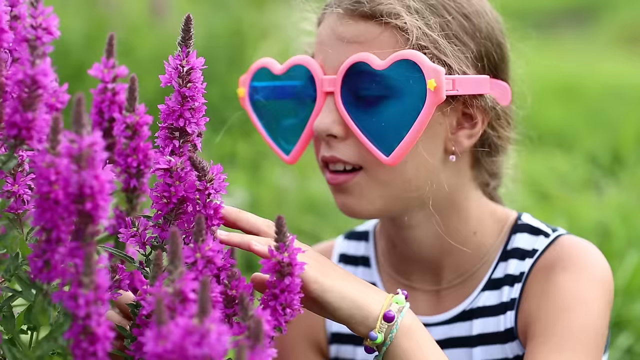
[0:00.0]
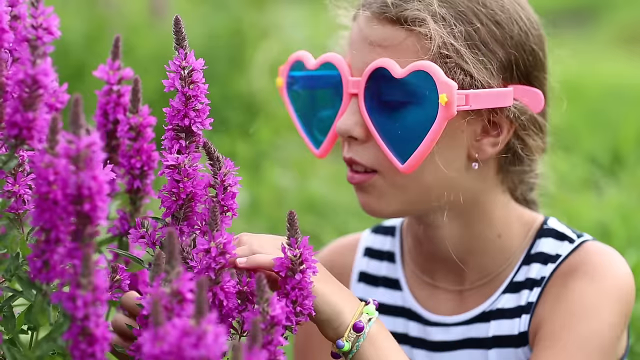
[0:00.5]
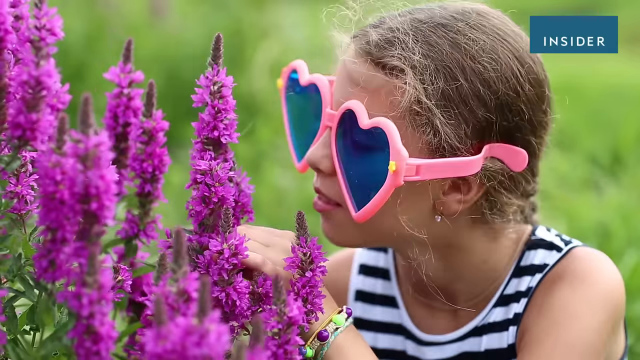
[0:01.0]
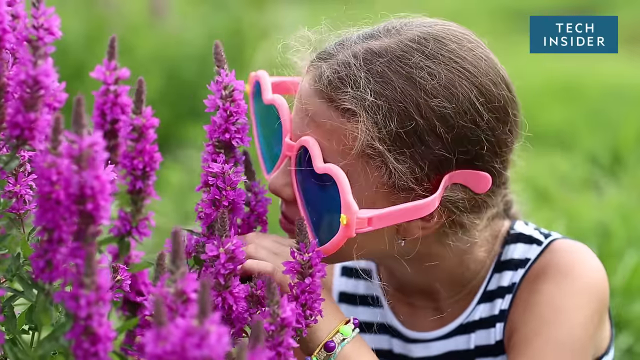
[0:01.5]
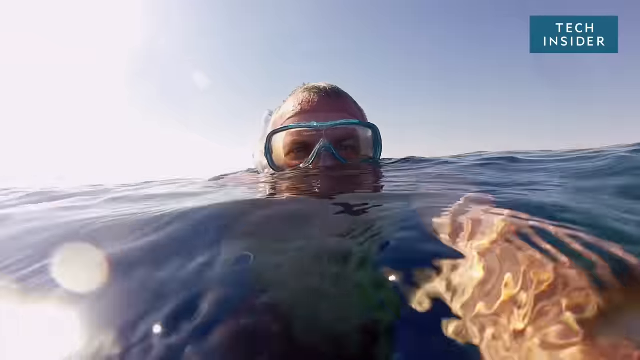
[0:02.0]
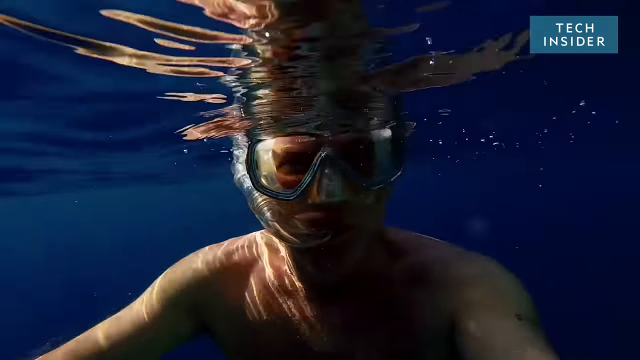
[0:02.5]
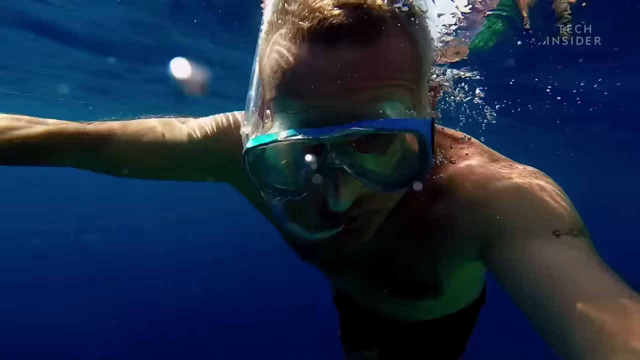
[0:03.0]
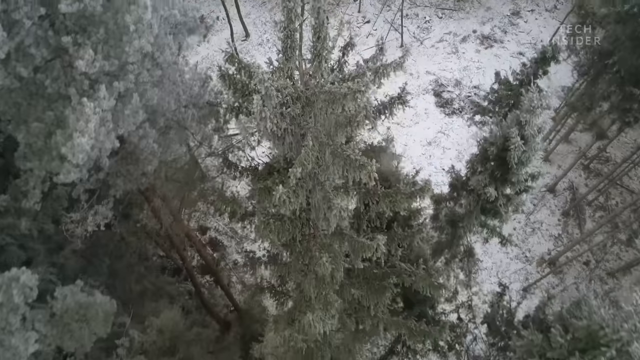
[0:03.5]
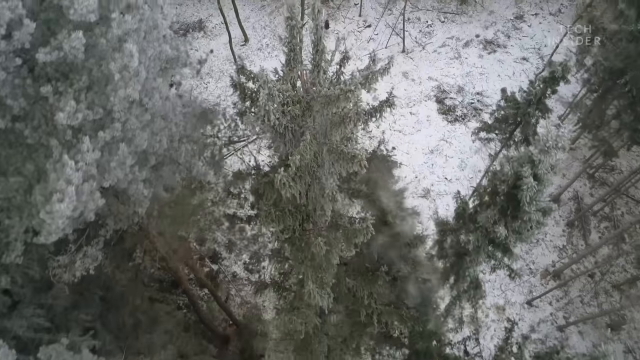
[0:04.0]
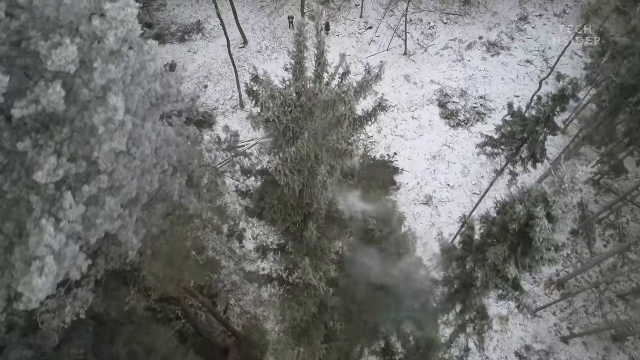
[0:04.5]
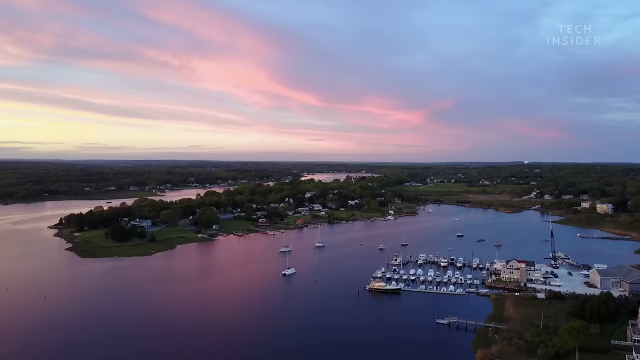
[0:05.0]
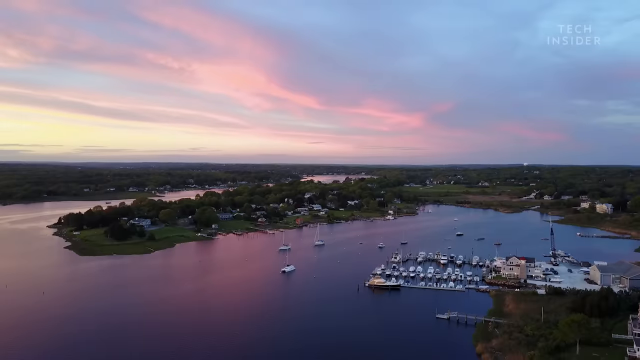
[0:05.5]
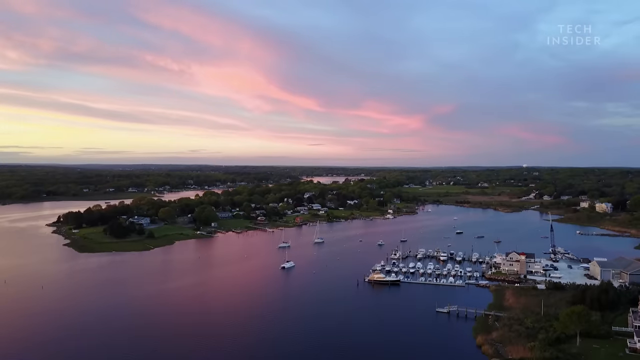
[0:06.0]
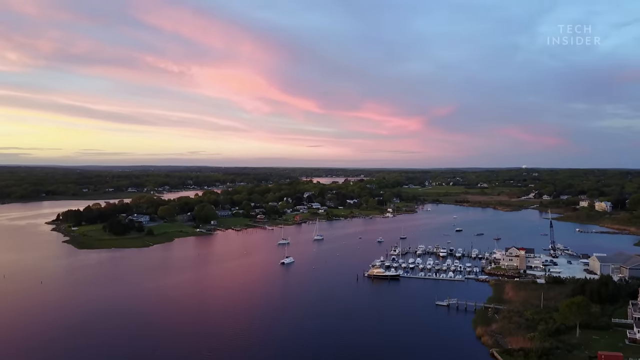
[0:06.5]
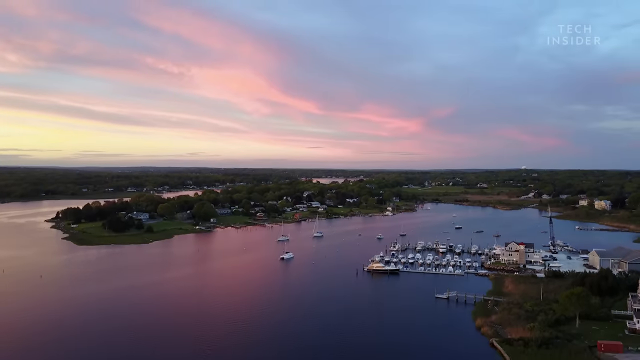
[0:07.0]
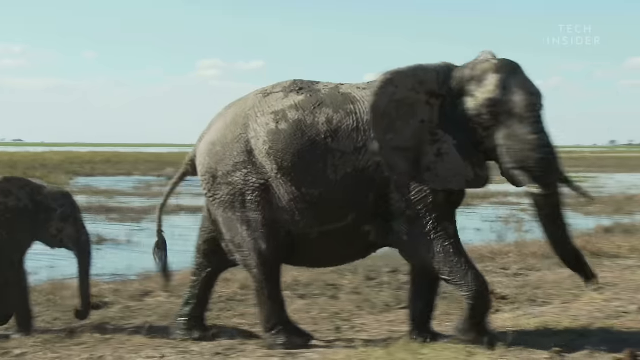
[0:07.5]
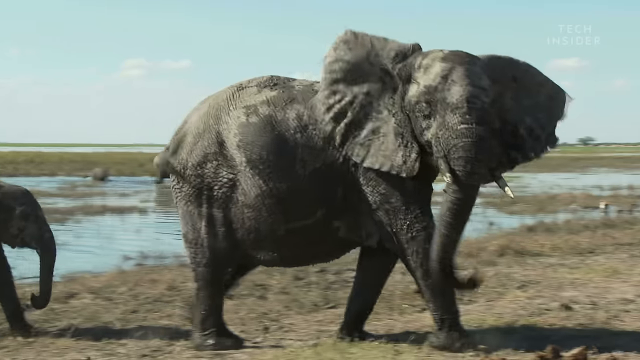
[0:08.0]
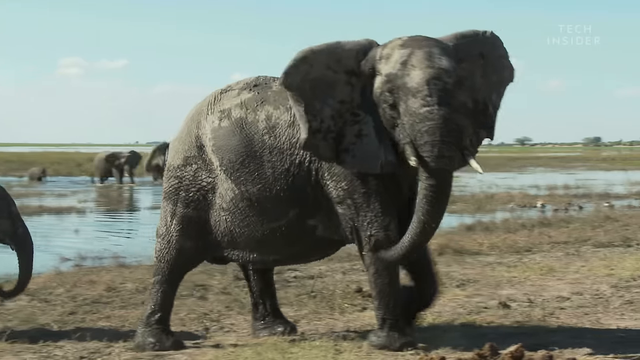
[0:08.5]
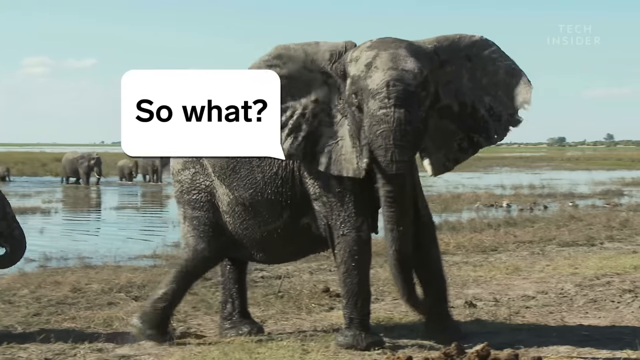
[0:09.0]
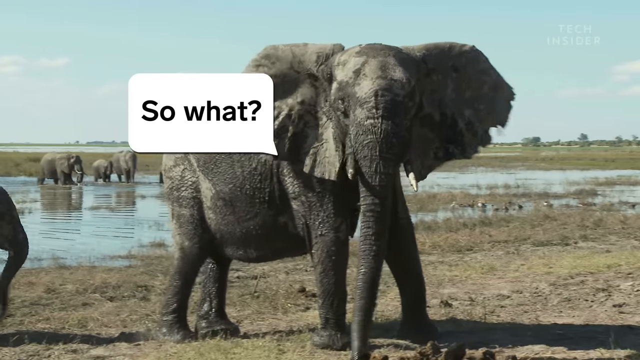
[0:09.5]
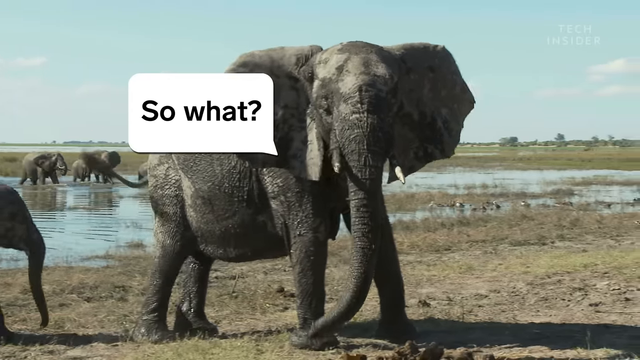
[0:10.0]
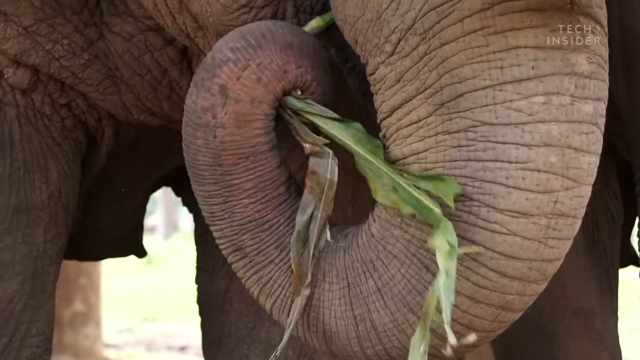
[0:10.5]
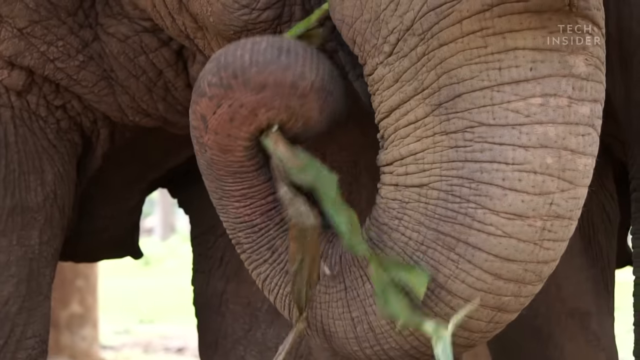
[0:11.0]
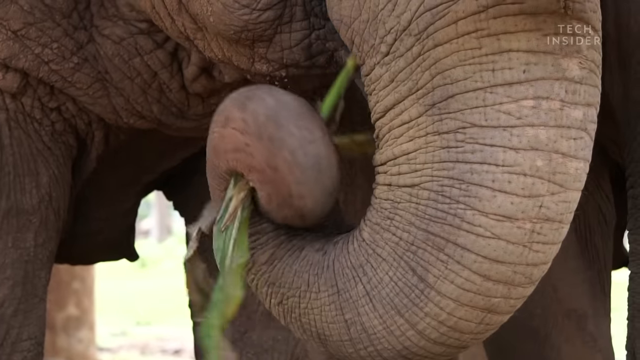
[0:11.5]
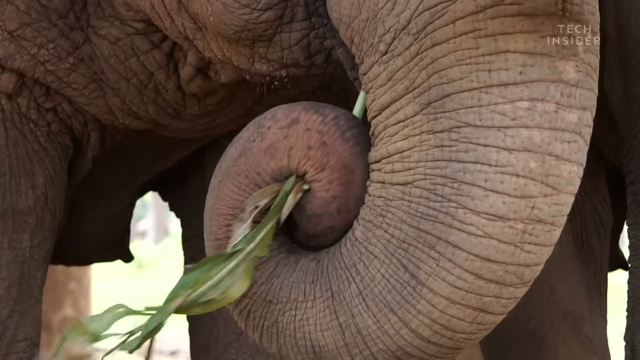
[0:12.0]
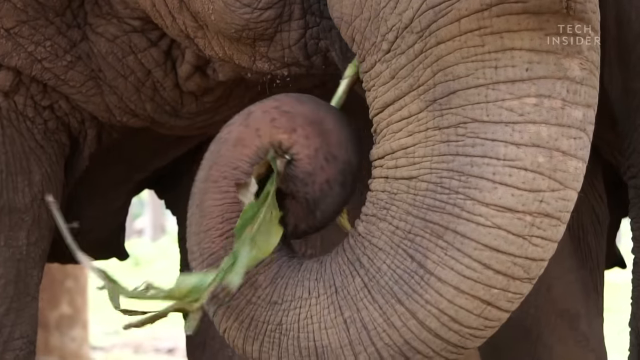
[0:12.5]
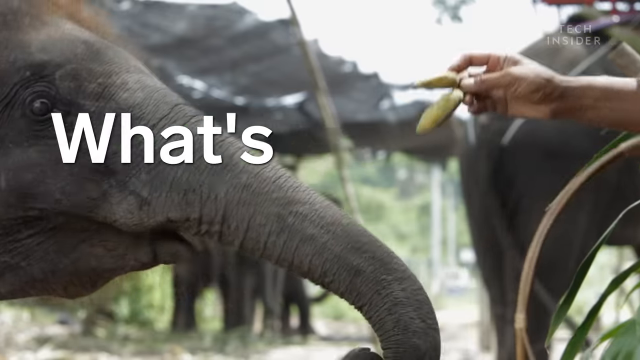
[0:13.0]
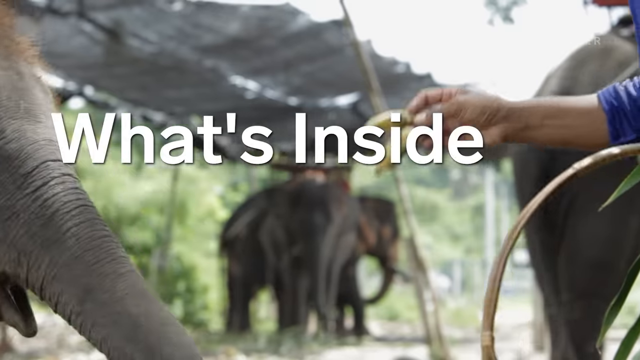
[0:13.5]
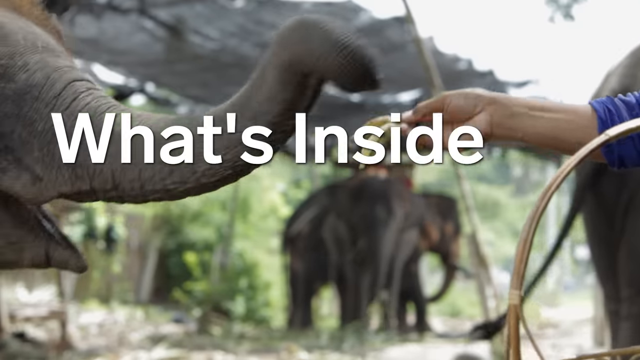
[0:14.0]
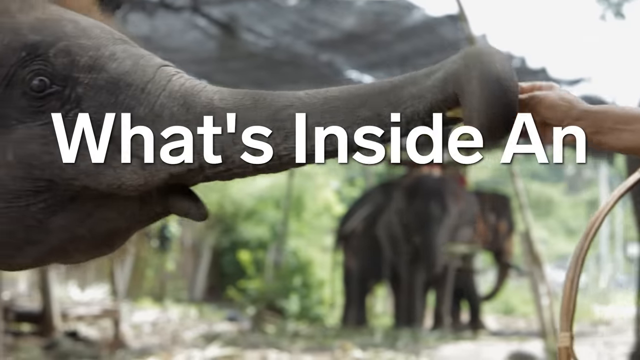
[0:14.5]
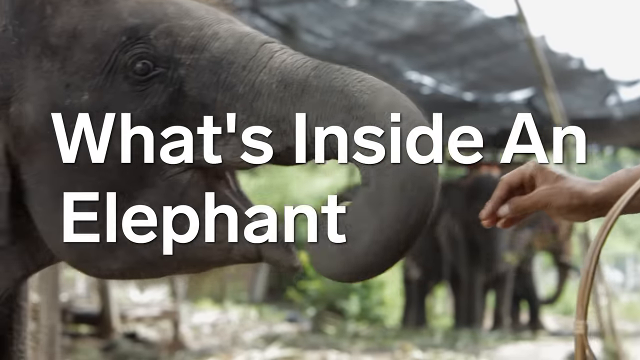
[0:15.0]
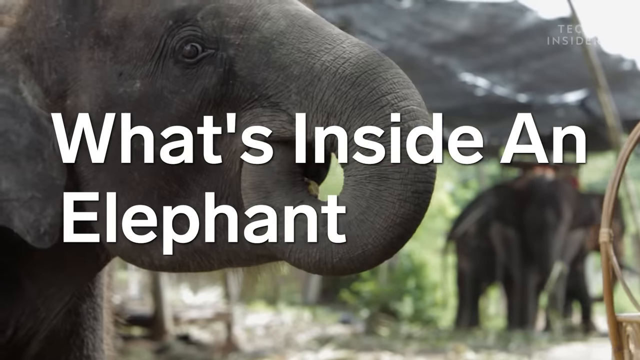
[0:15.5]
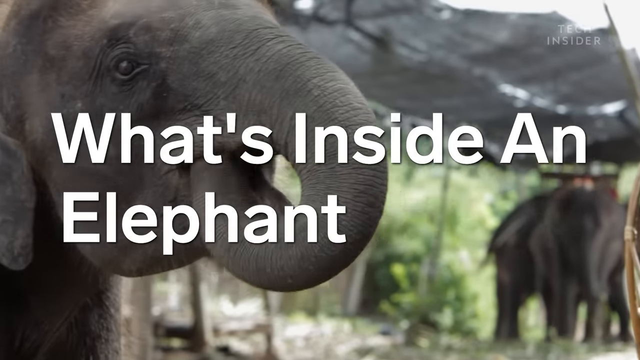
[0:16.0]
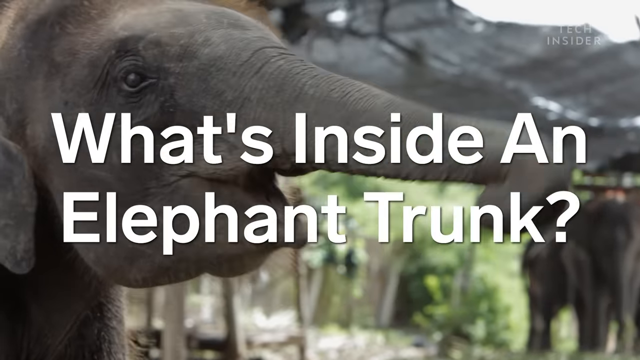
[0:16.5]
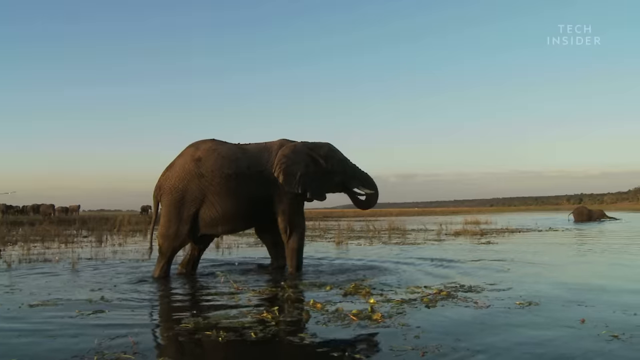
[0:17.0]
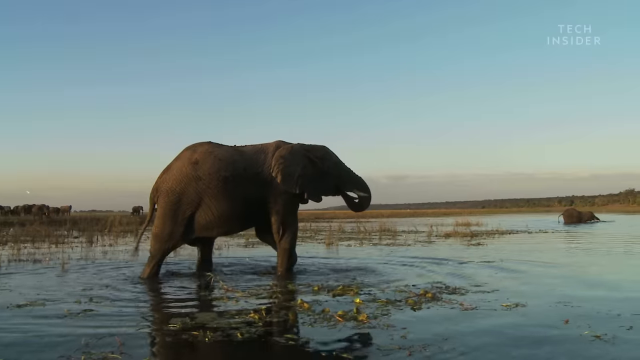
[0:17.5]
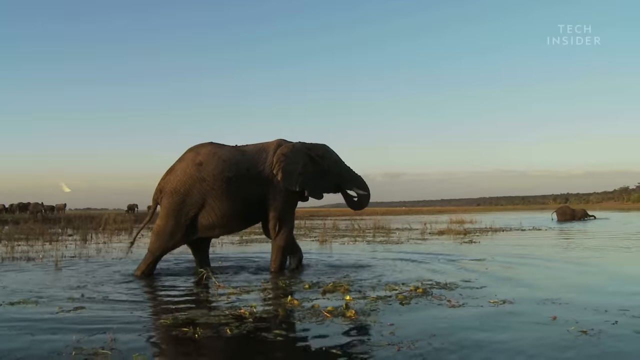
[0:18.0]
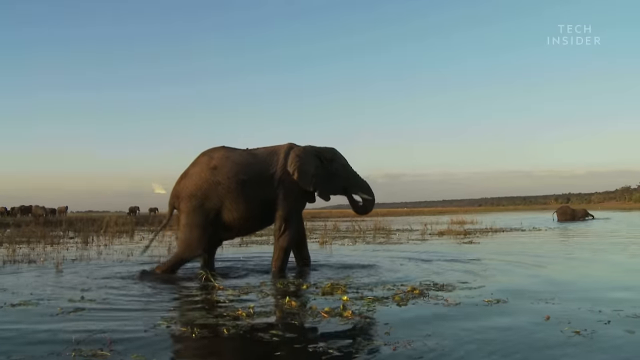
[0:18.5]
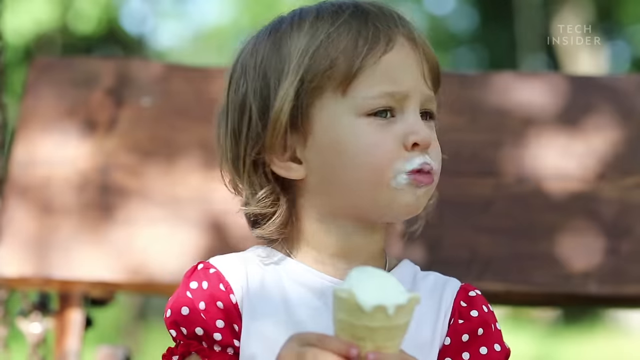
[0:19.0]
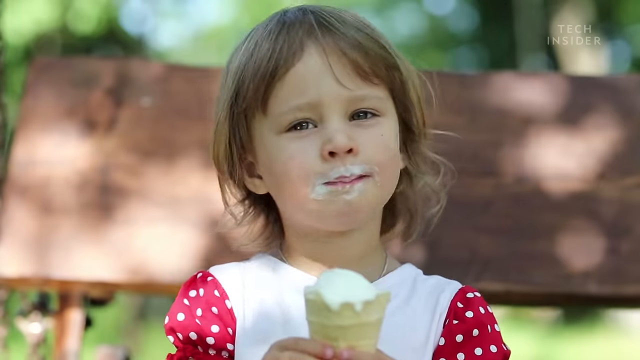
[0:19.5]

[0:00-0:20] The video begins with a little girl who wears pink glasses, a bracelet and a striped shirt. Then a tree falls, a big area appears, then an elephant with the words so what, and an elephant eating a leaf. The title "what's inside an elephant's trunk" is displayed while a person apparently feeds an elephant some bananas. An elephant trunk is spread down, a little elephant appears, and a child finishes eating an ice cream. The elephants are in a swampy area. In the top right corner at the beginning, a "Tech Insider" logo appears in white font; as the video progresses it becomes difficult to see because the lighting makes the white invisible.